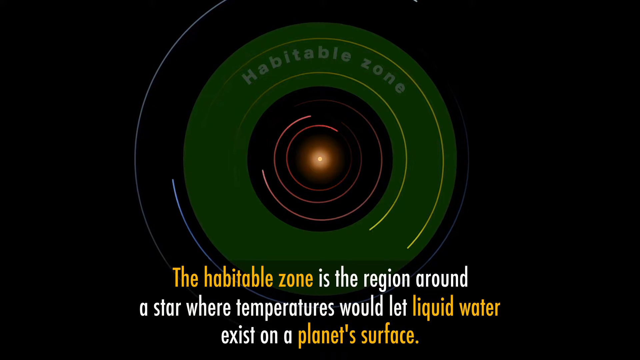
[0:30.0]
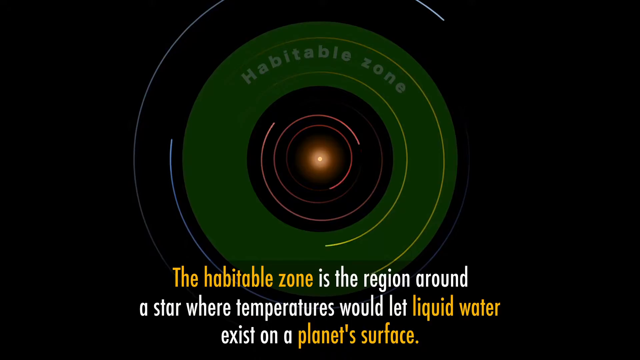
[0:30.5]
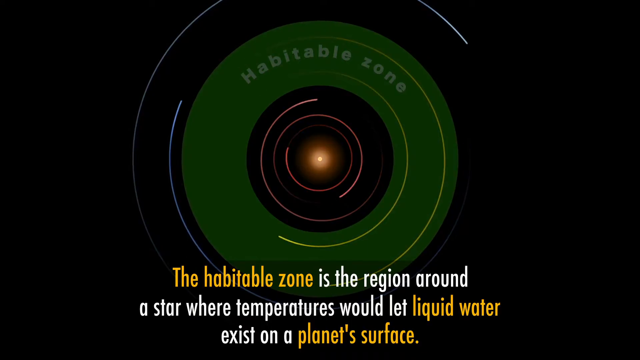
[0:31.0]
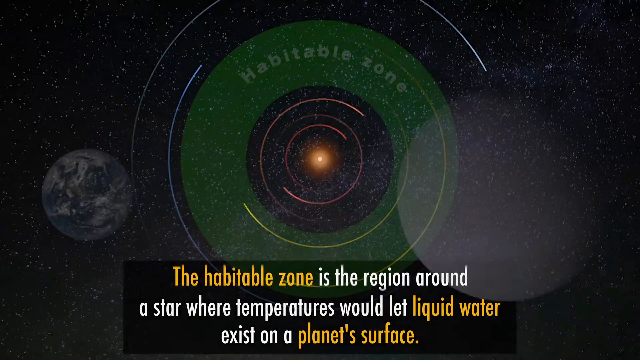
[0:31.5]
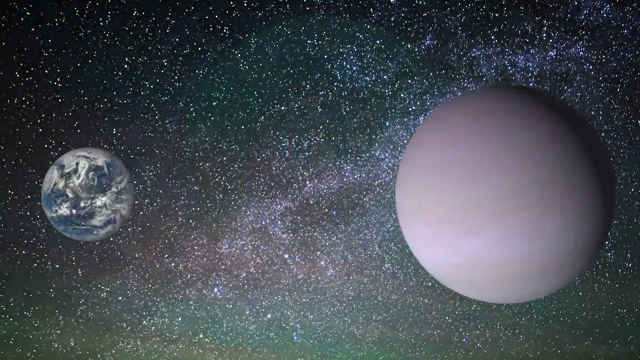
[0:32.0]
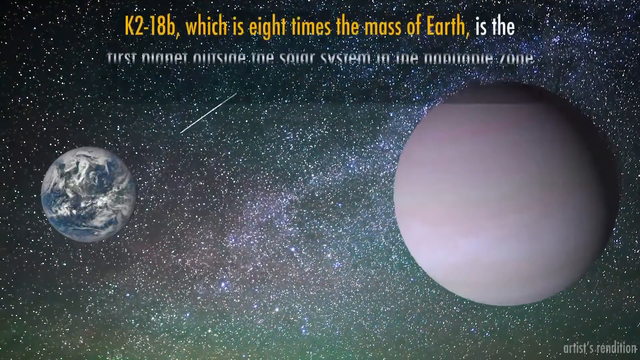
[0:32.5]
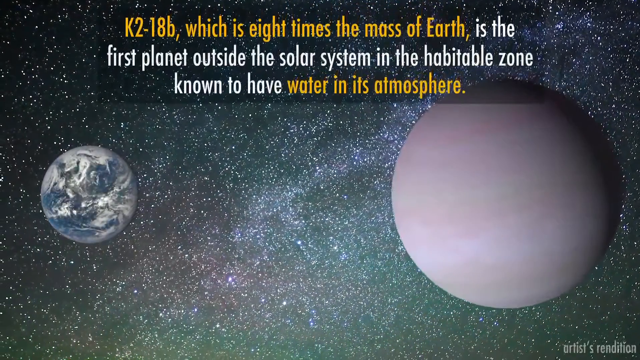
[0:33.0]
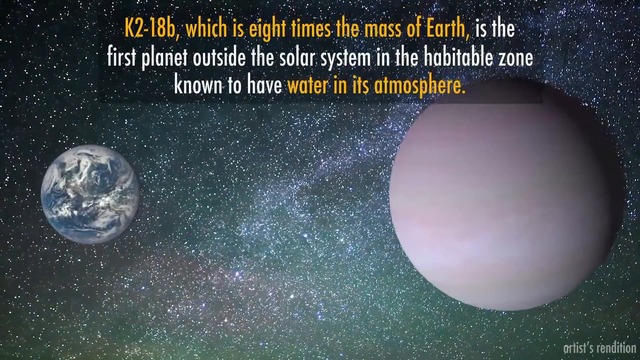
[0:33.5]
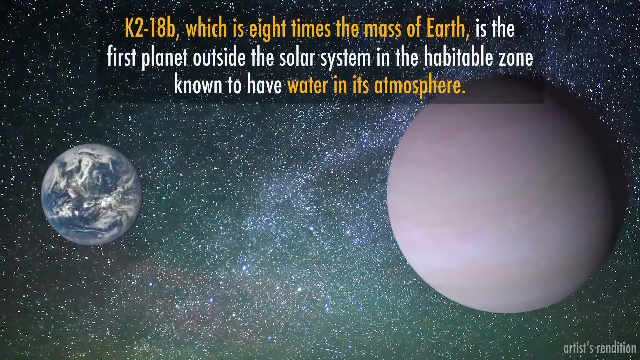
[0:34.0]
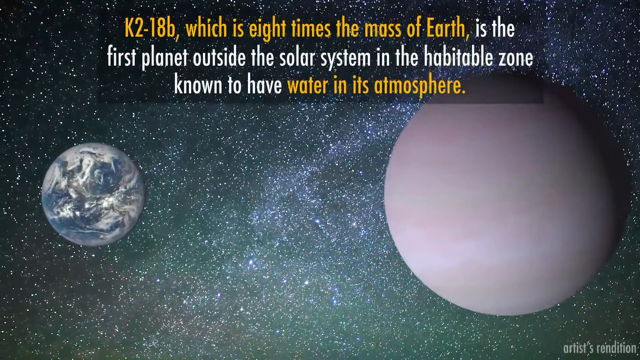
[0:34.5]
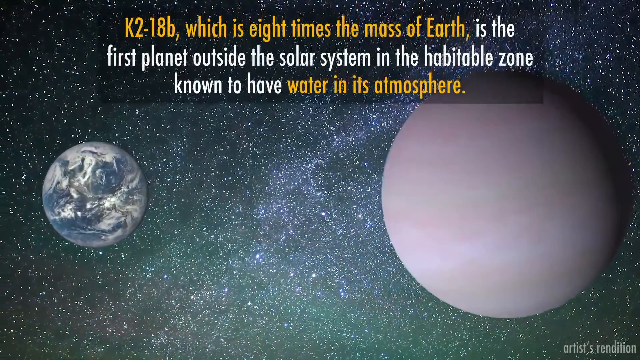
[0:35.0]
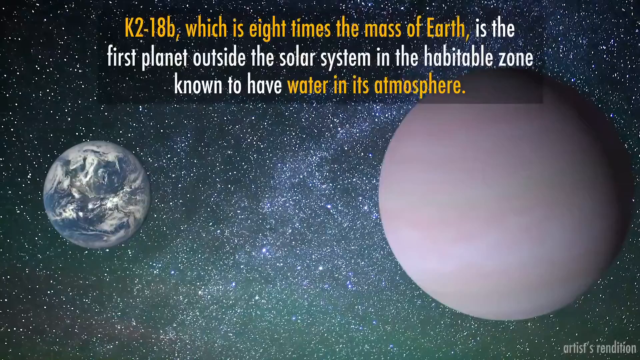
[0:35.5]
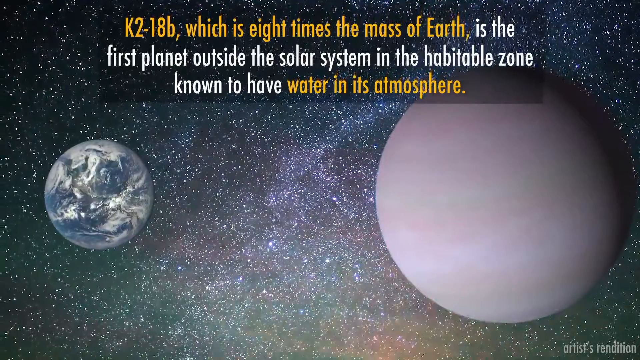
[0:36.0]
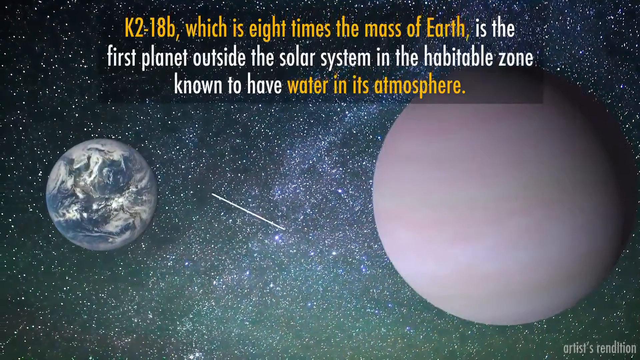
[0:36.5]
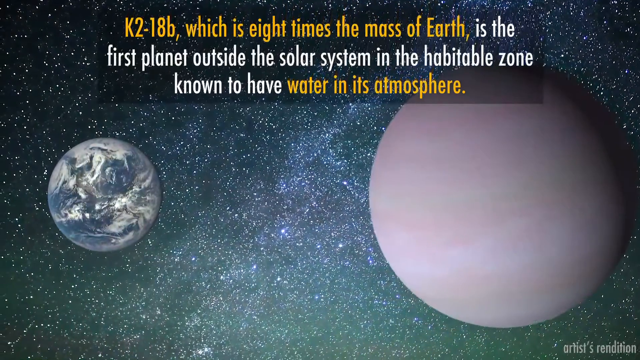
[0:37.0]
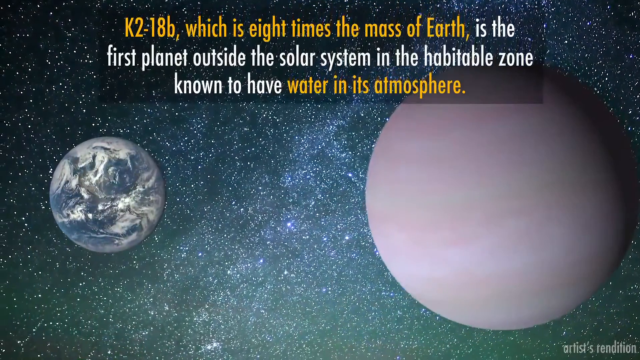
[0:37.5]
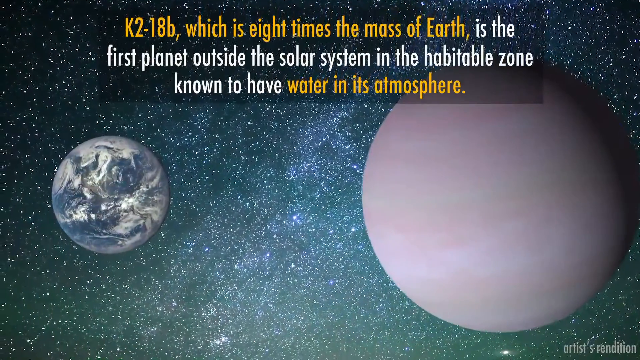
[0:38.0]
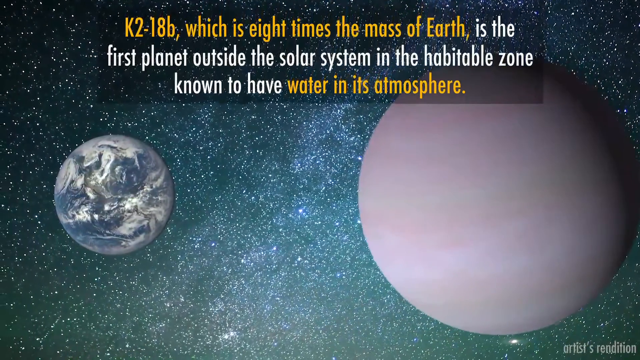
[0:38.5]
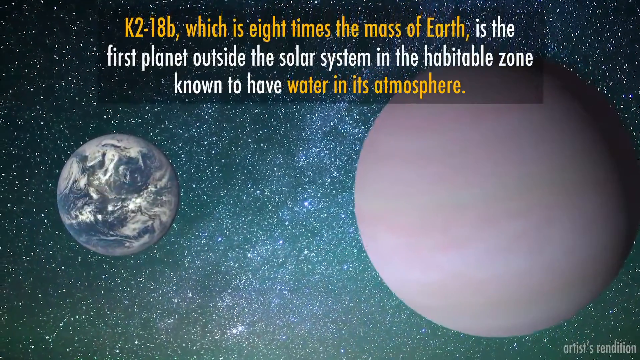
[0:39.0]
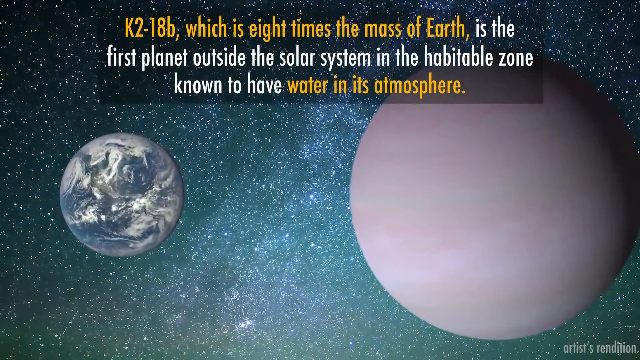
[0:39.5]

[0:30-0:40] The sun is in the center with the red swirls, the green circle labeled "habitable zone", and then the blue swirls. Text at the bottom reads "the habitable zone is the region around a star where temperatures would let liquid water exist on a planet's surface." Next, an Earth-like planet is on the left and a larger or closer gray orb is on the right, against a black background with a large number of stars. Text at the top says "K2-18b which is eight times the mass of Earth is the first planet outside the solar system in the habitable zone known to have water in its atmosphere." Shooting stars go through the frame.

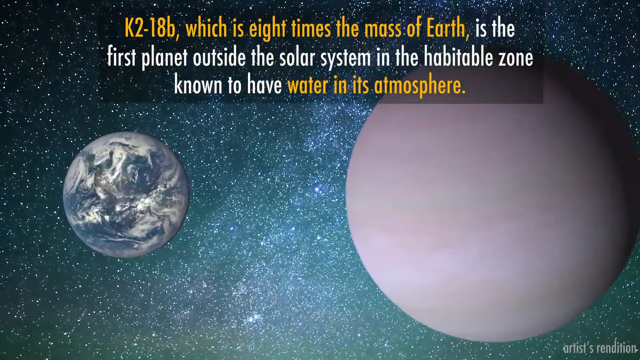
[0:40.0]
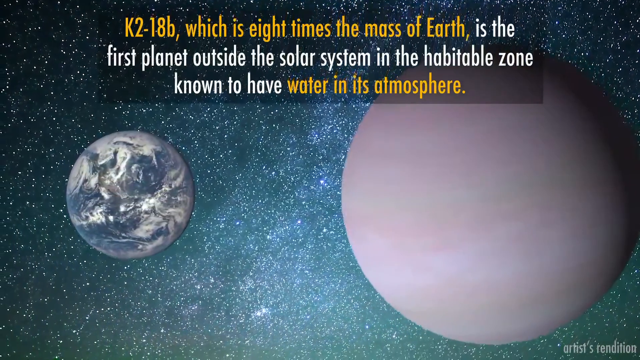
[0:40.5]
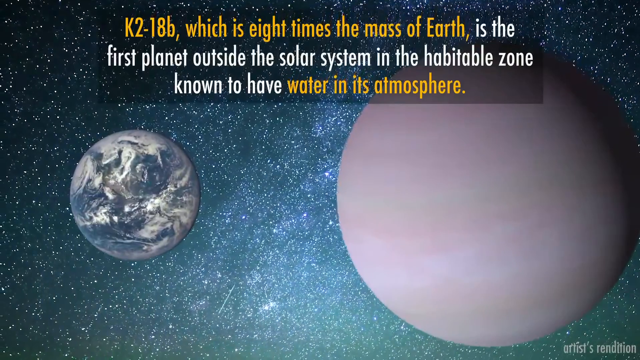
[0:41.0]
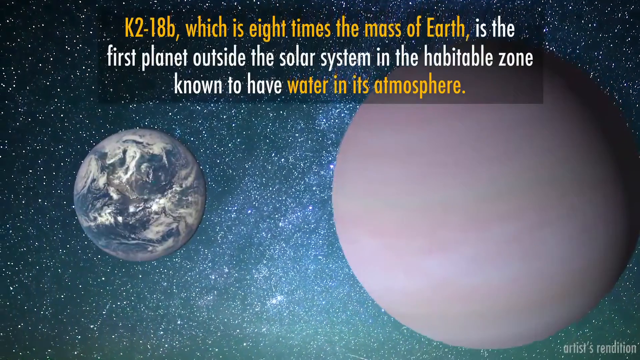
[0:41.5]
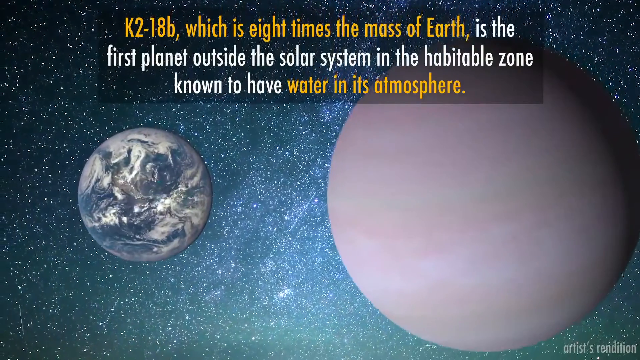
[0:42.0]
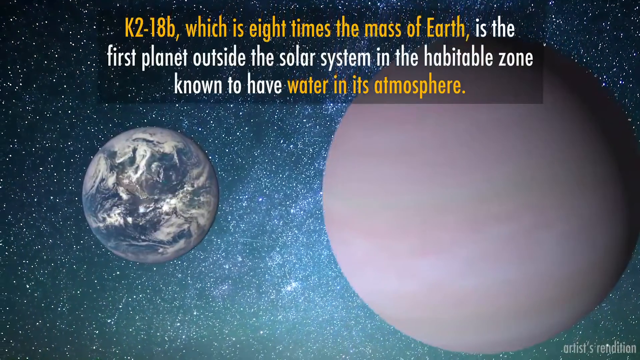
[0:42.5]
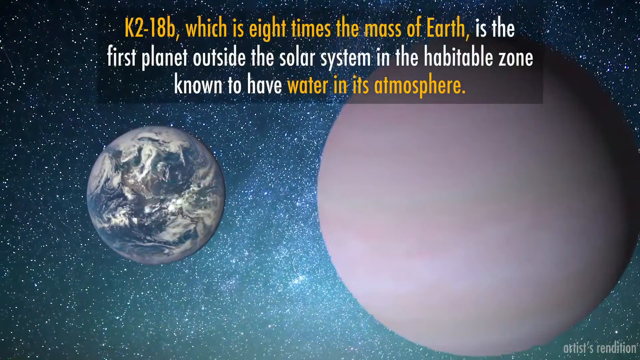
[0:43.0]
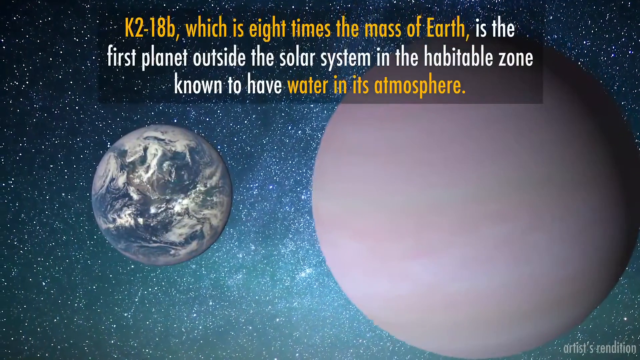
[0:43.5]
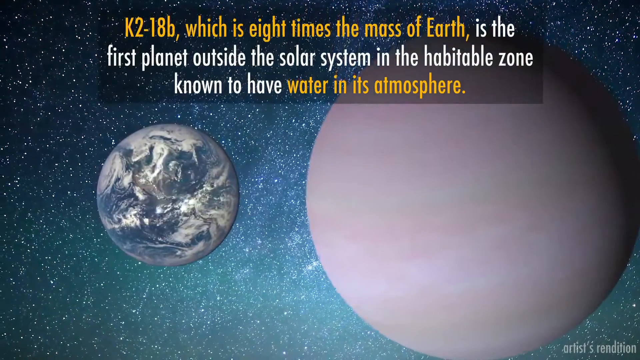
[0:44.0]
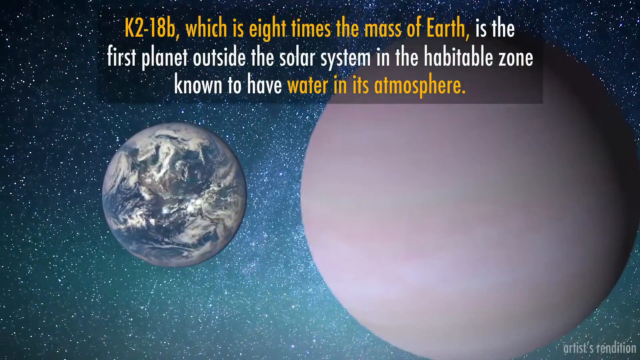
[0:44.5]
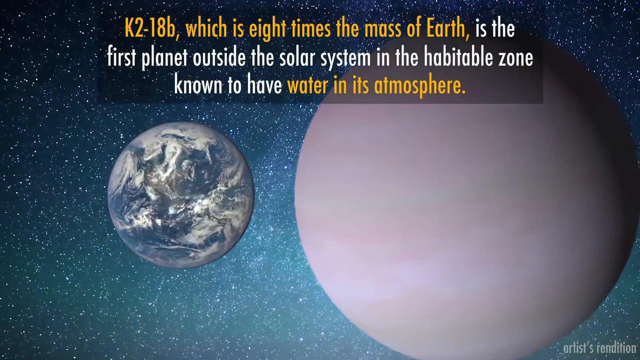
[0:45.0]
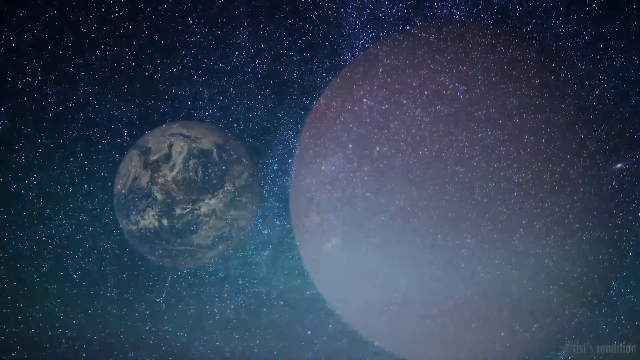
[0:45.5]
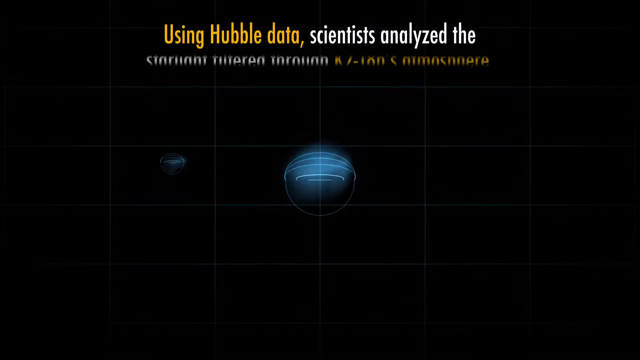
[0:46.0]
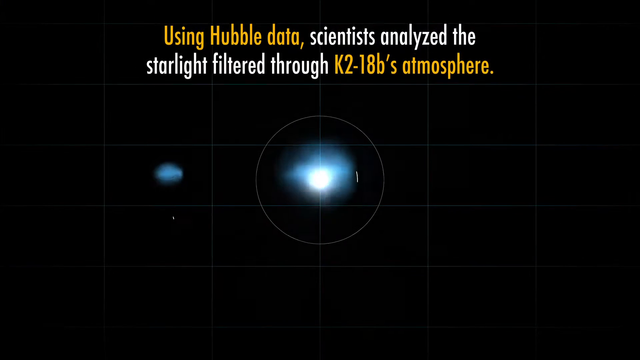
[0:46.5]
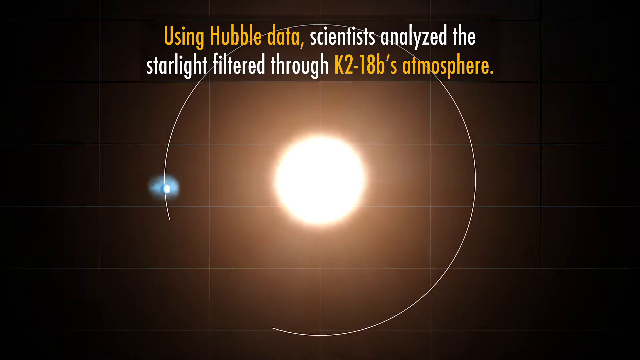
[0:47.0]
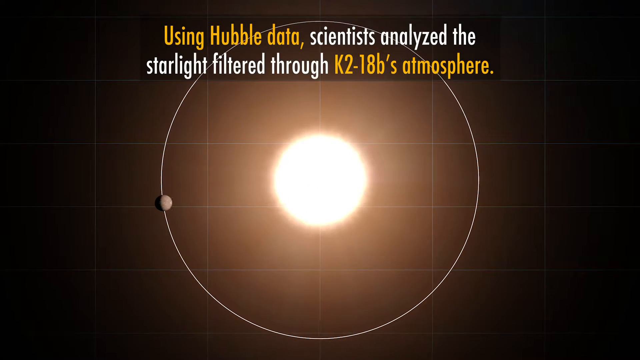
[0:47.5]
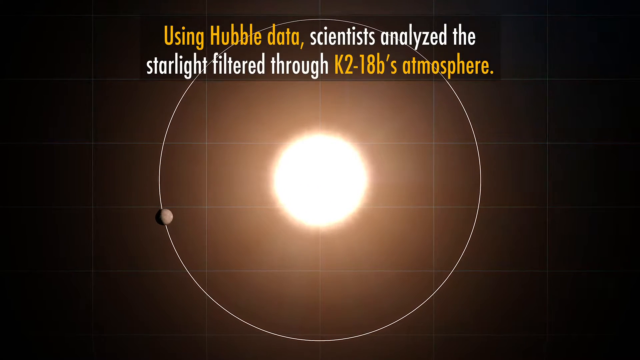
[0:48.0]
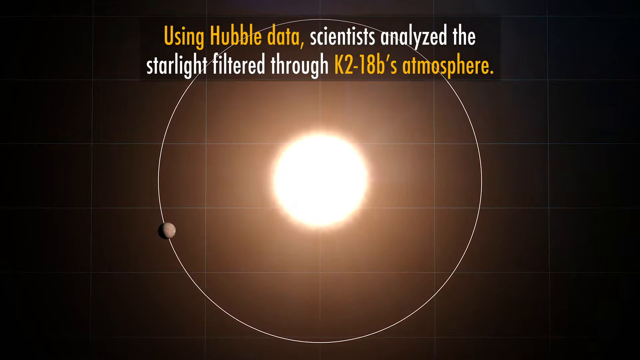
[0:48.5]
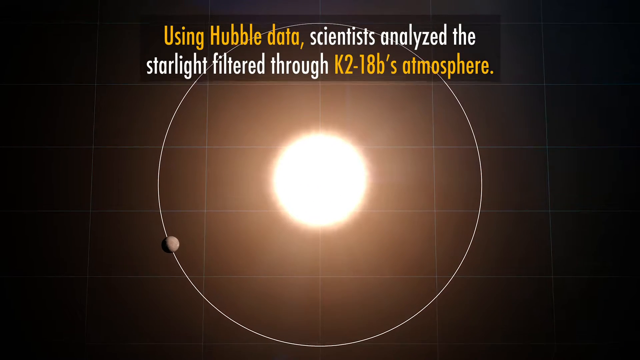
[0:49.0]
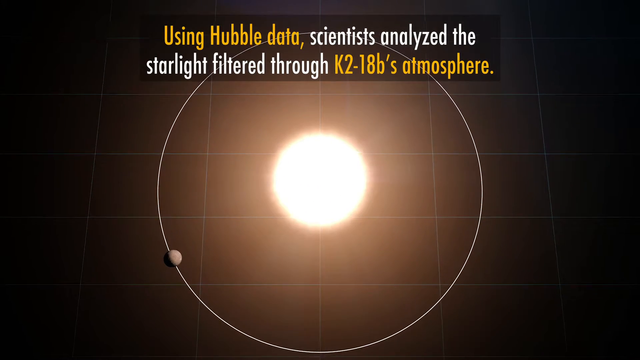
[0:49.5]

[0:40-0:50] The very starry sky with shooting stars shows Earth on the left and a gray planet on the right, which has been kind of coming closer to the Earth planet. A new screen then shows a bright light in a circle. A line forms a circle around it, and to the left a gray planet on that line rotates counterclockwise. The background is black with a translucent grid over top of it, and text at the top reads "using Hubble data scientists analyzed the starlight filtered through K2-18b's atmosphere".